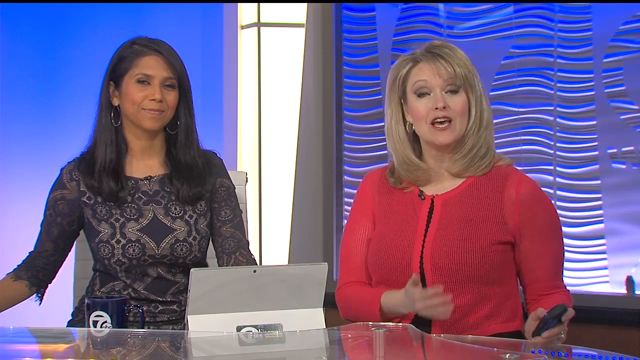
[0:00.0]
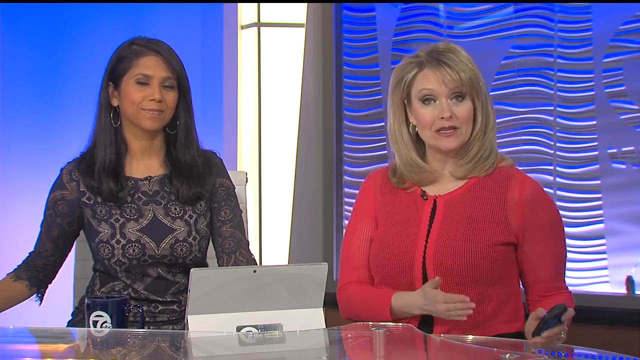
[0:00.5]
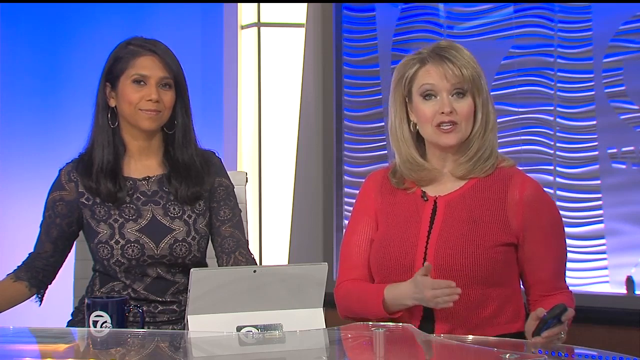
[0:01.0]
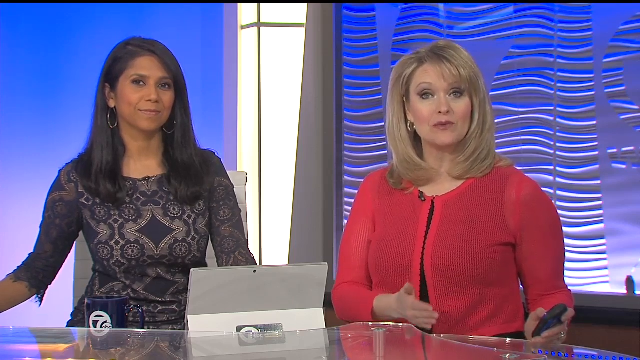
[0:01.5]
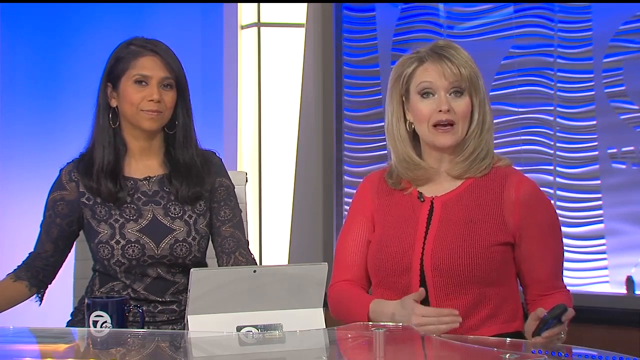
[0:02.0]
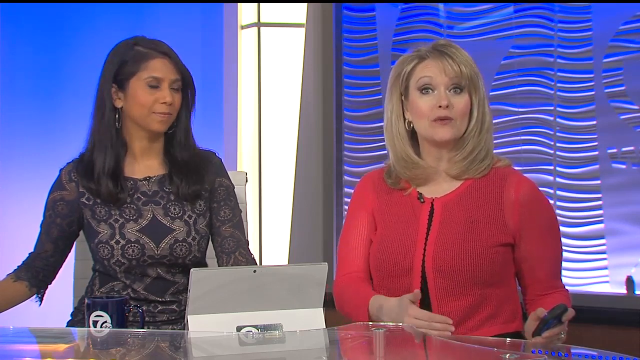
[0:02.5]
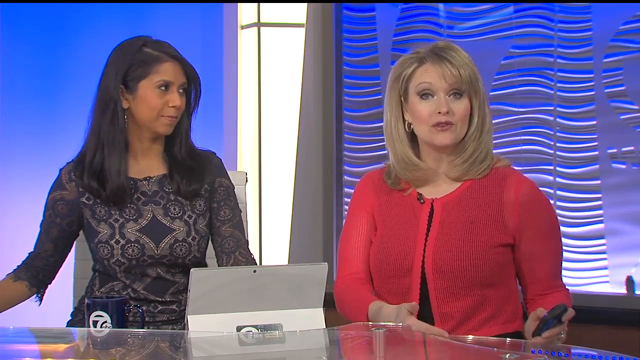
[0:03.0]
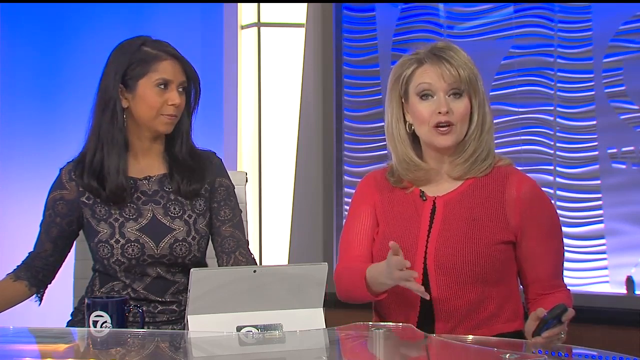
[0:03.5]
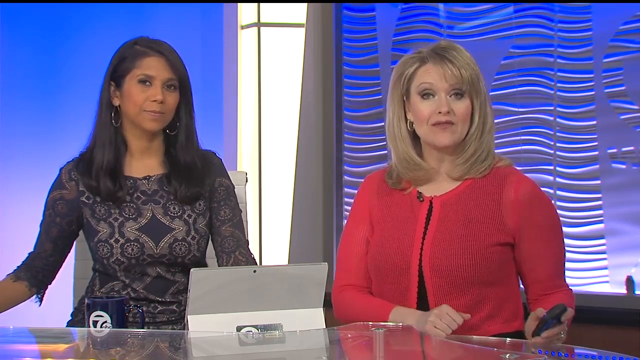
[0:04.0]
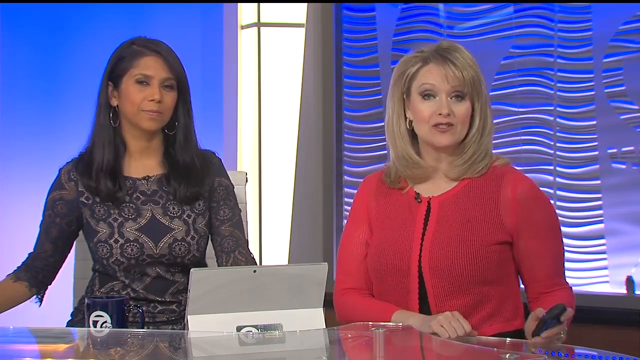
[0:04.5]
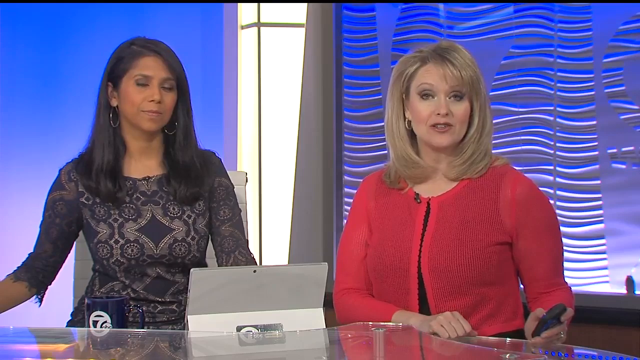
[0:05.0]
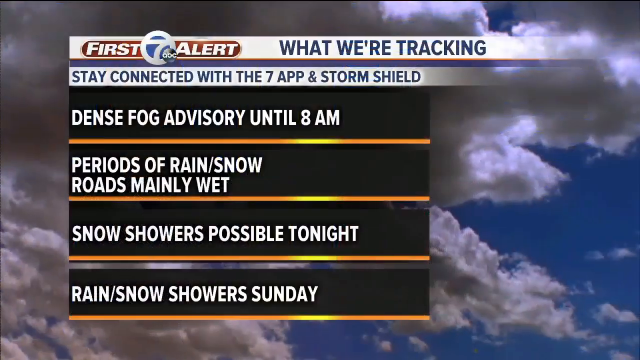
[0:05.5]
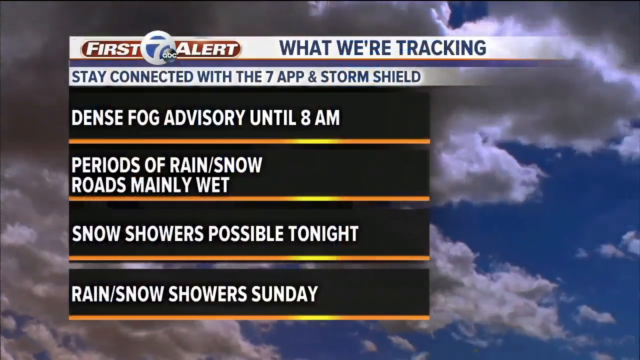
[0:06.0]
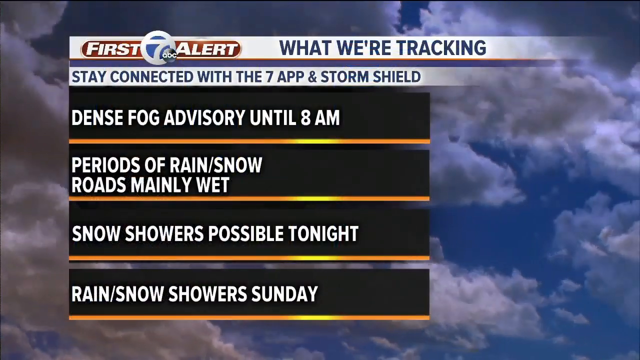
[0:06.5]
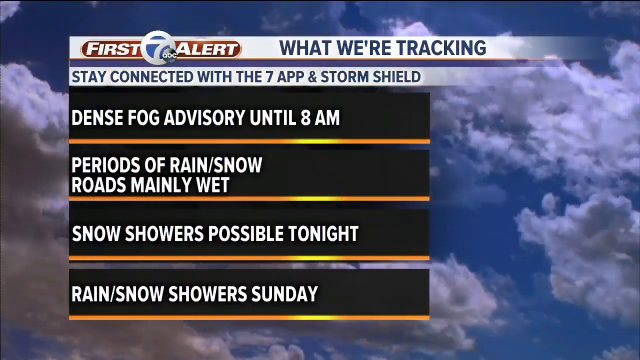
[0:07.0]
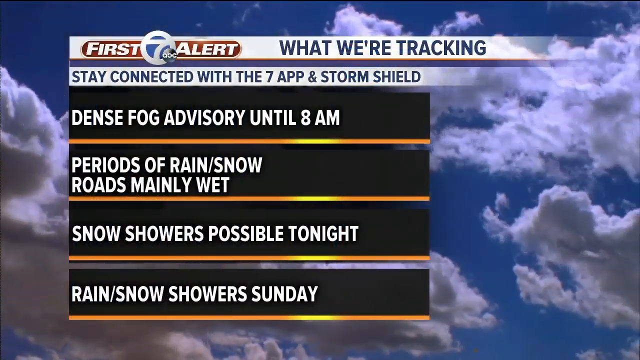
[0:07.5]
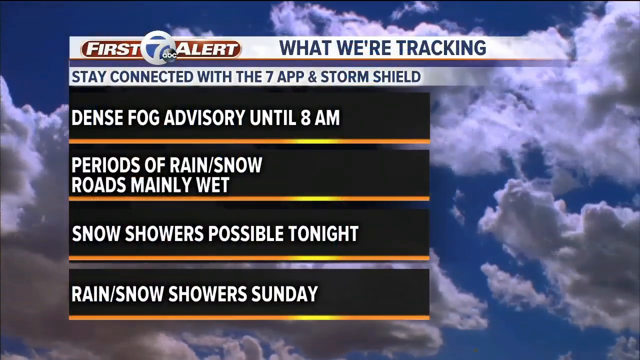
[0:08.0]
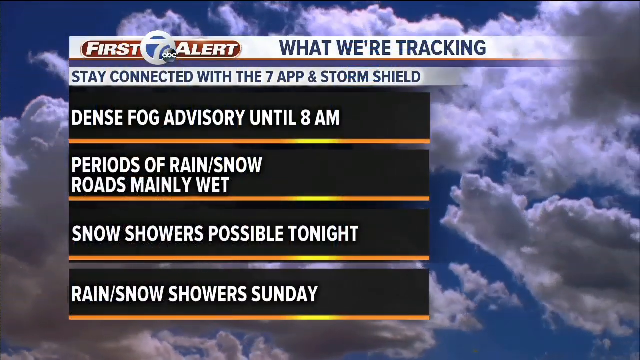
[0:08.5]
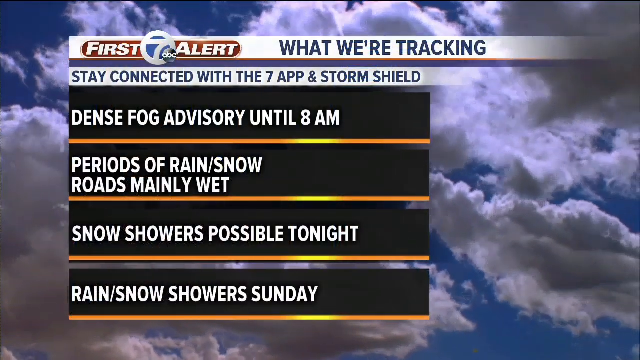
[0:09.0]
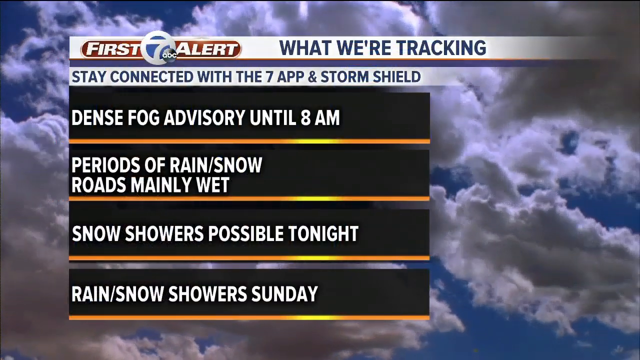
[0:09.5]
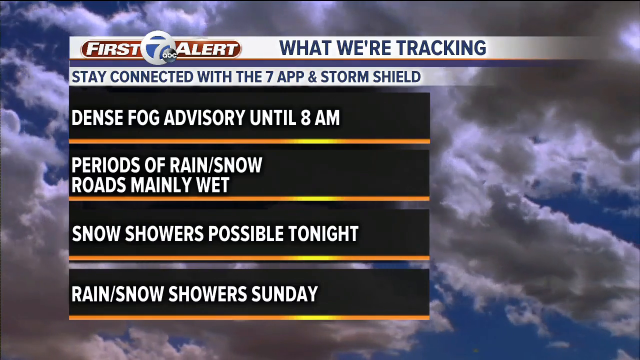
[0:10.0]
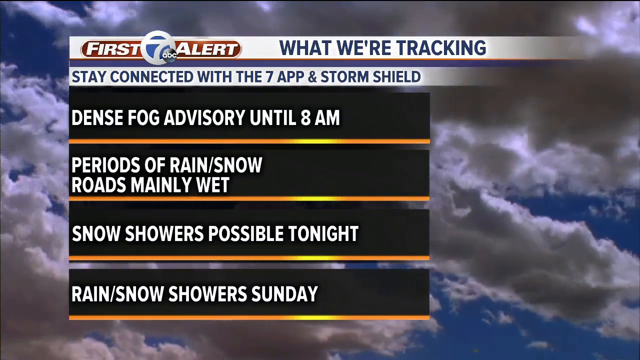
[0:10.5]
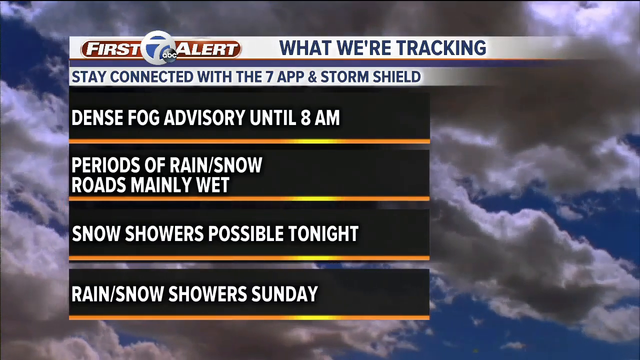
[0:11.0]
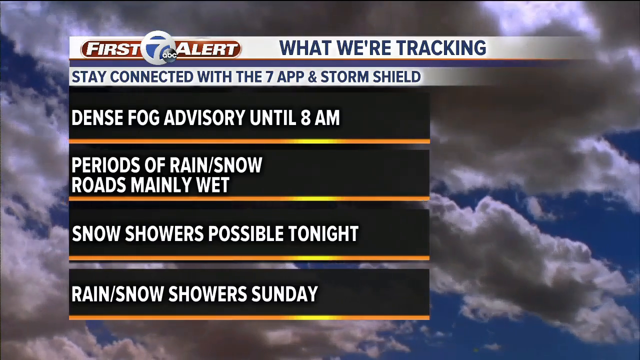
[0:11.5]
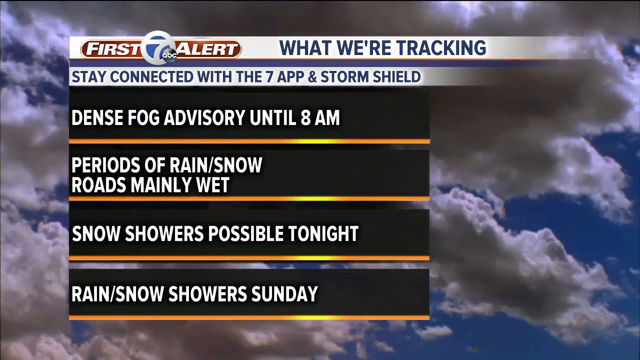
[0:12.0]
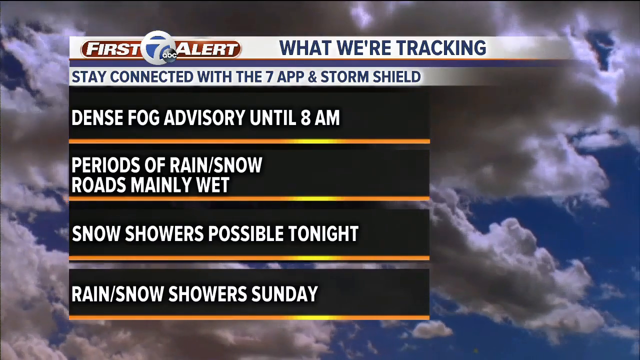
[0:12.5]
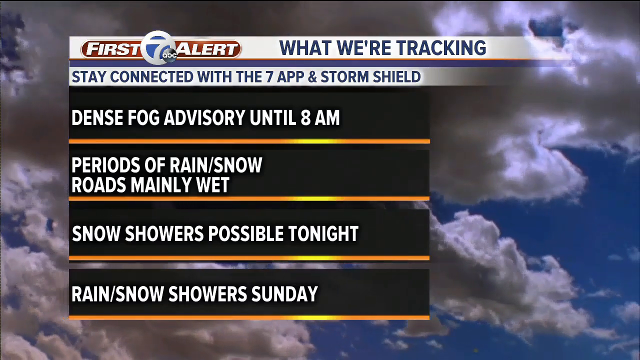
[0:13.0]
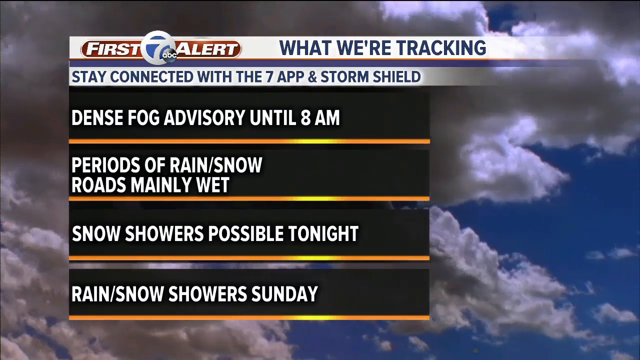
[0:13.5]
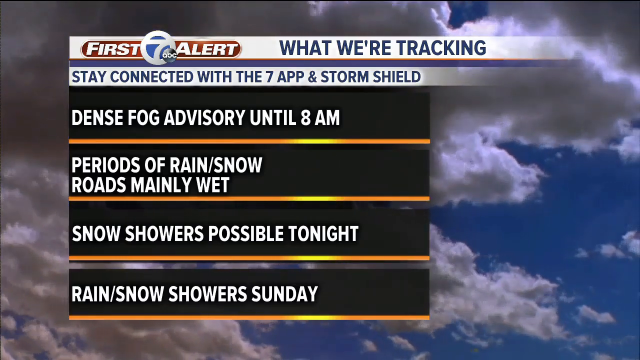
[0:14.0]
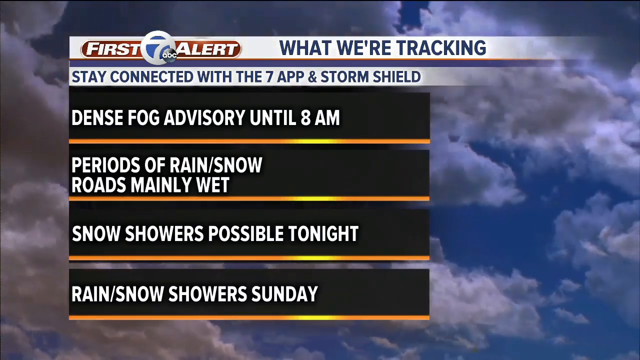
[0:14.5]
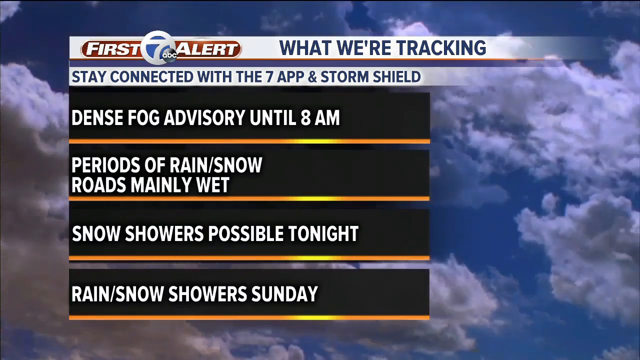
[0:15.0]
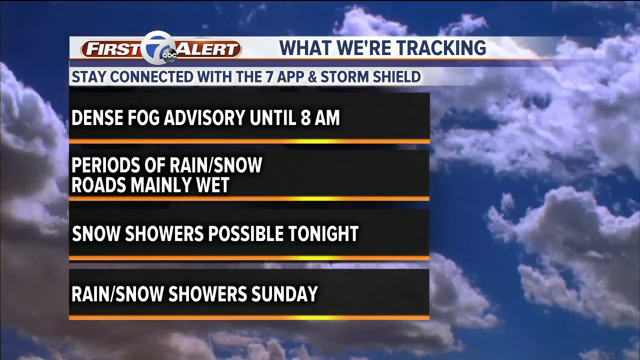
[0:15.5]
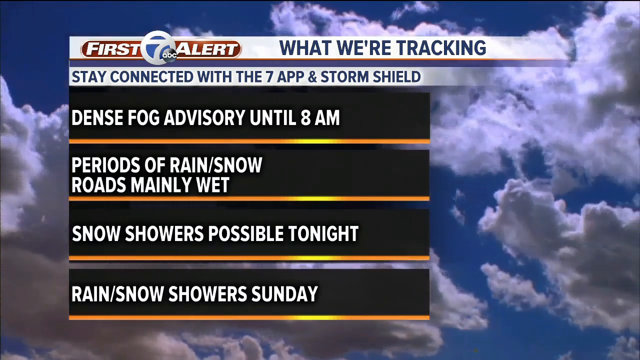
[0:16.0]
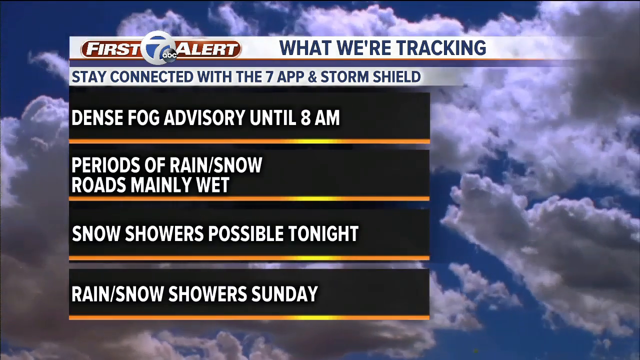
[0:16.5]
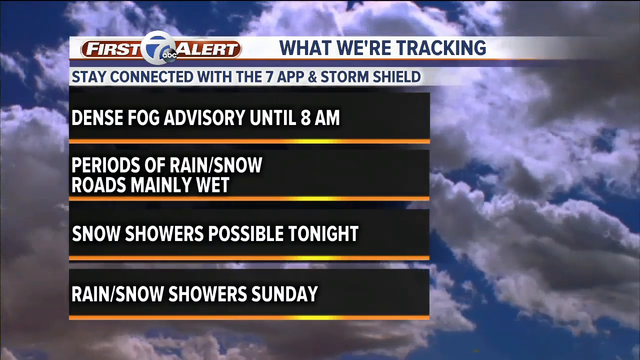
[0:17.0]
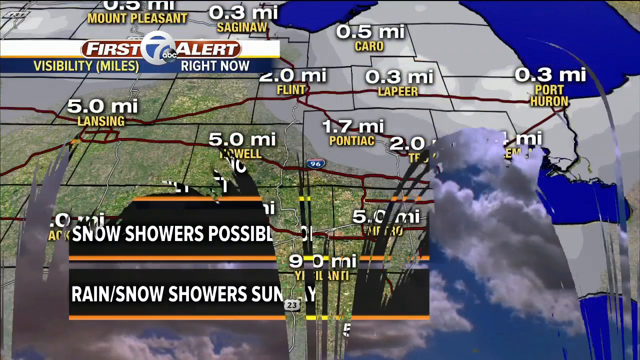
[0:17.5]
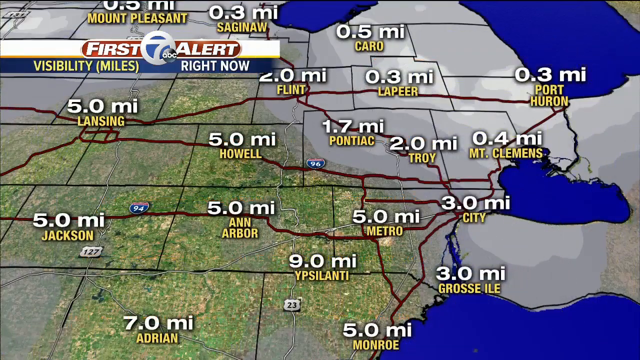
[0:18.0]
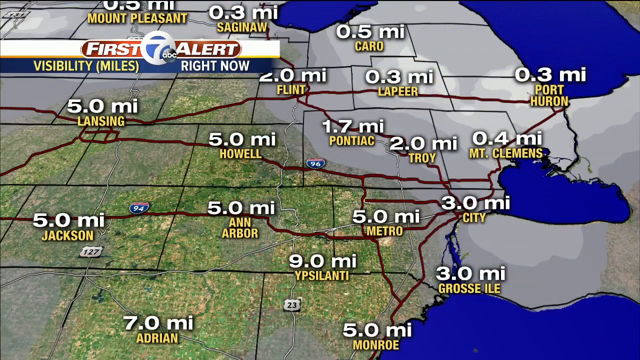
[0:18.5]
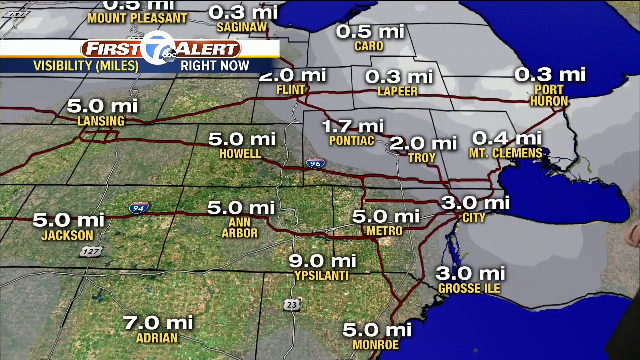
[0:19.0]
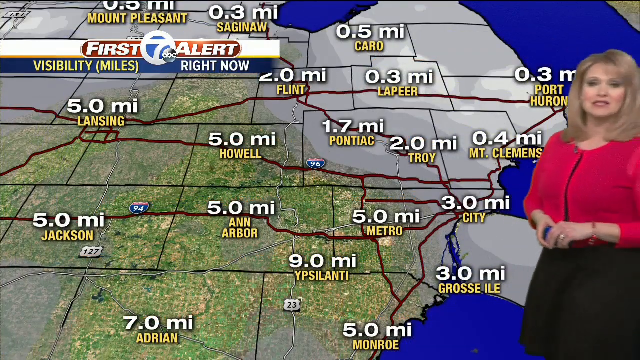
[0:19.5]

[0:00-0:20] A Channel 7 News segment shows a woman in a red jacket or shirt next to a woman in a black dress; they are sitting in front of a tablet. On-screen text reads "what we're tracking," "Stay connected with the 7 app and StormShield," "Dense fog advisory till 8am," "Periods of rain/snow," "Roads mainly wet," "Snow showers possible tonight" and "Rain/snow showers Sunday." The woman then goes in front of a projector screen showing a map of the area and surrounding areas.